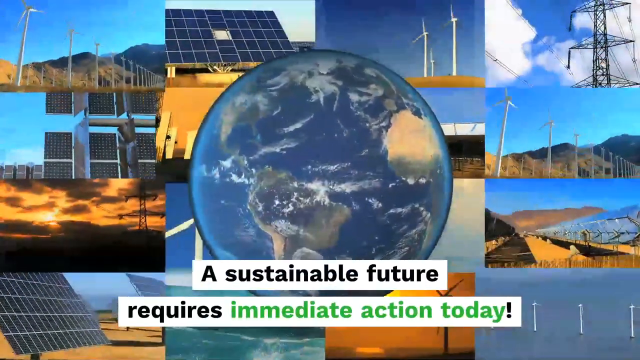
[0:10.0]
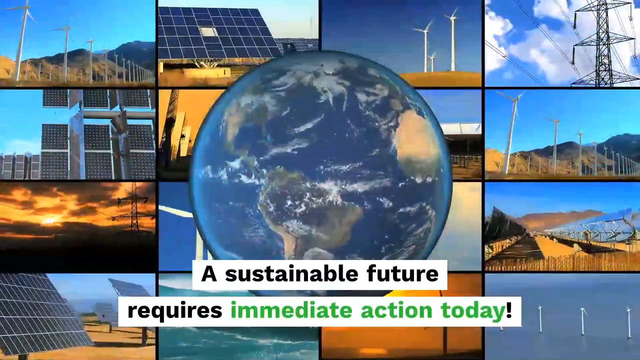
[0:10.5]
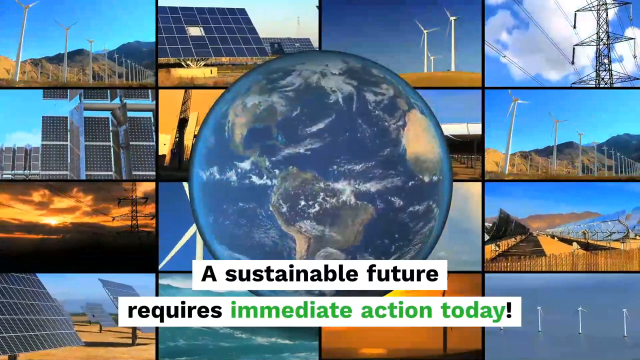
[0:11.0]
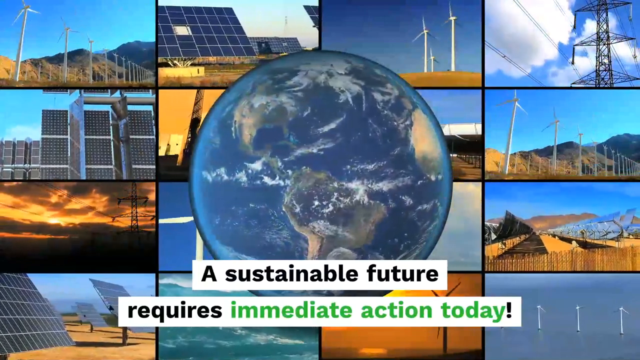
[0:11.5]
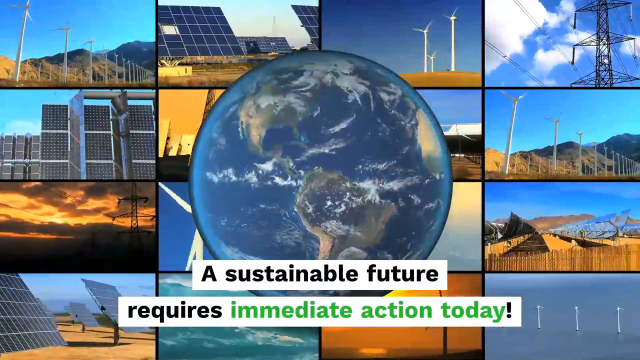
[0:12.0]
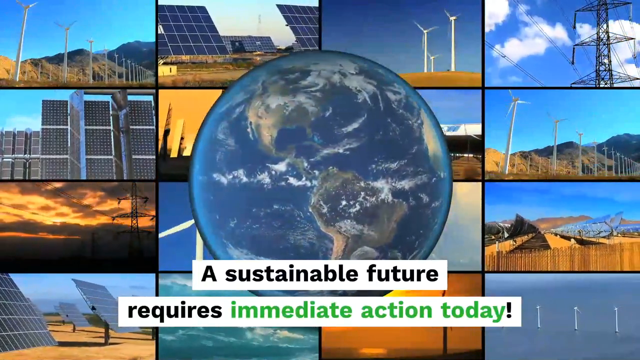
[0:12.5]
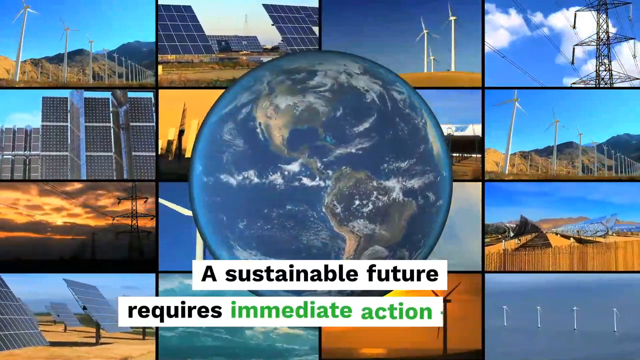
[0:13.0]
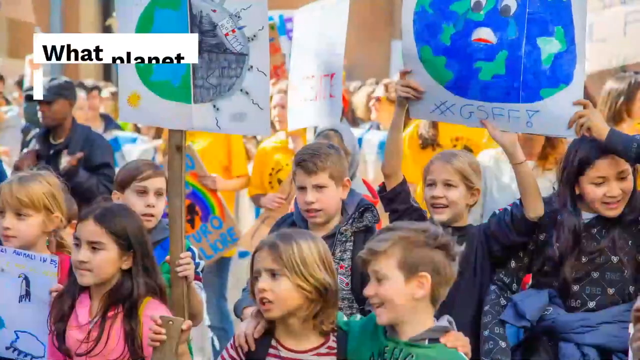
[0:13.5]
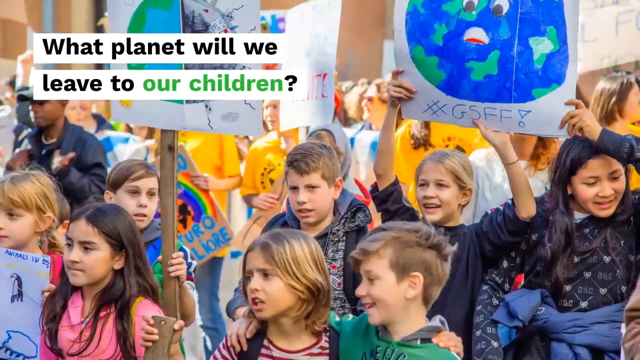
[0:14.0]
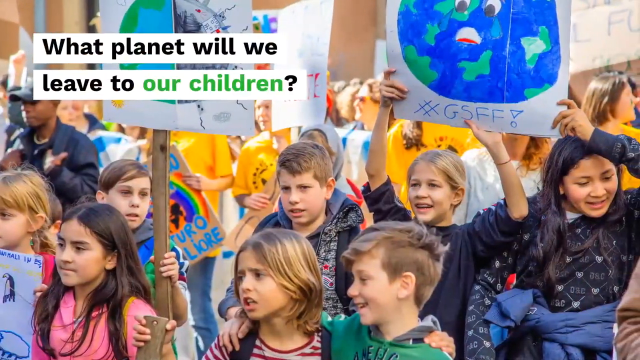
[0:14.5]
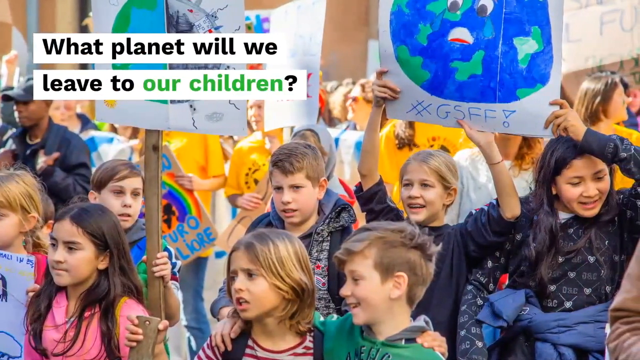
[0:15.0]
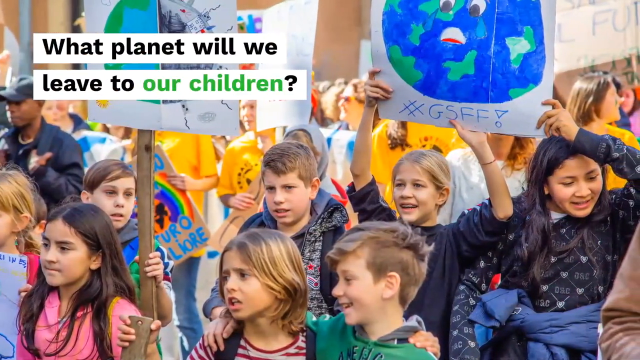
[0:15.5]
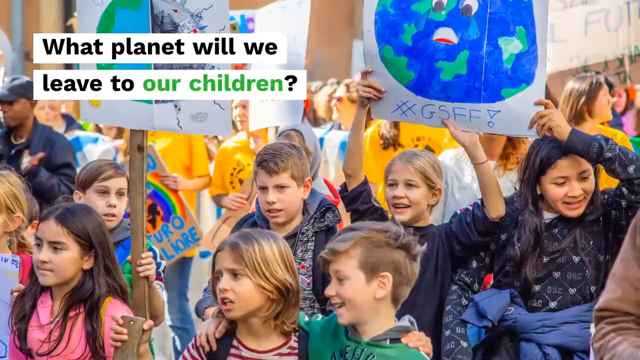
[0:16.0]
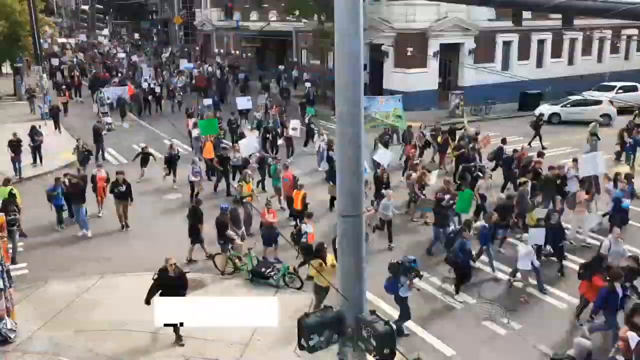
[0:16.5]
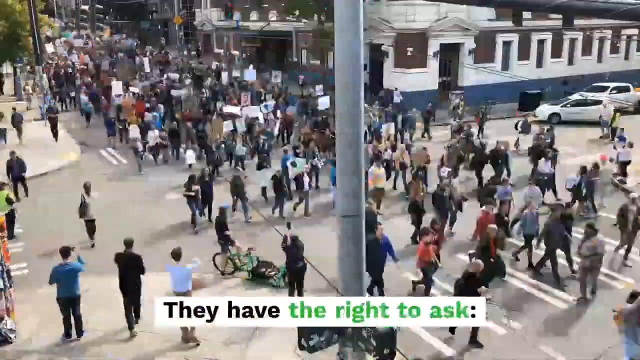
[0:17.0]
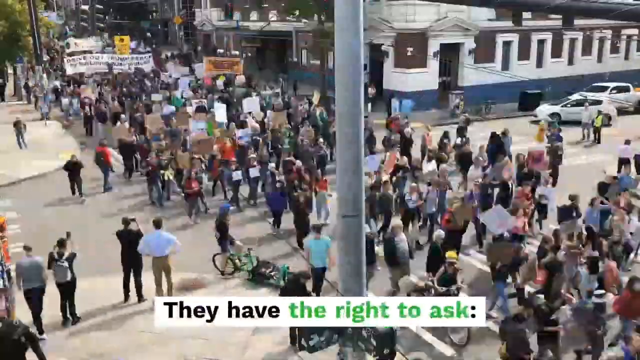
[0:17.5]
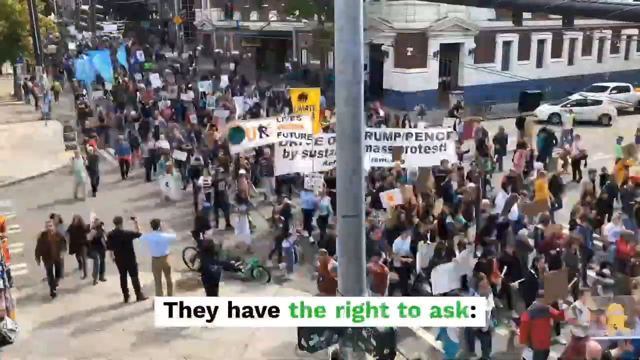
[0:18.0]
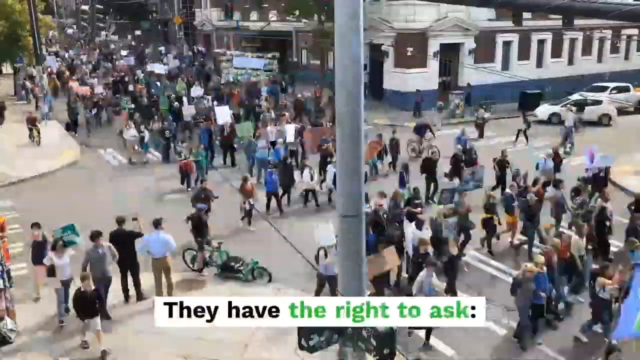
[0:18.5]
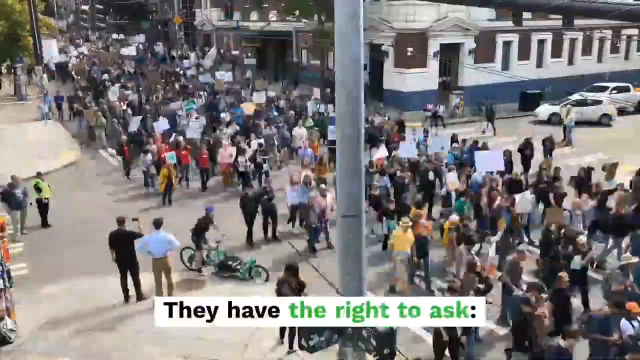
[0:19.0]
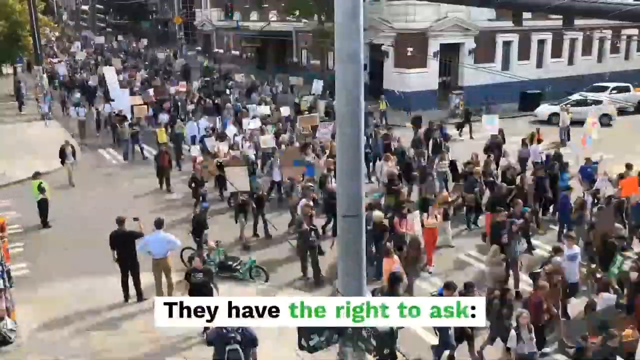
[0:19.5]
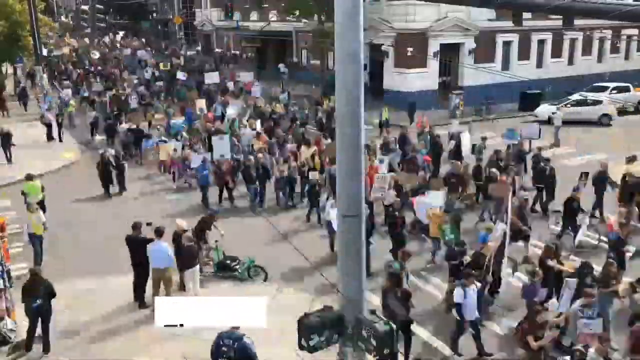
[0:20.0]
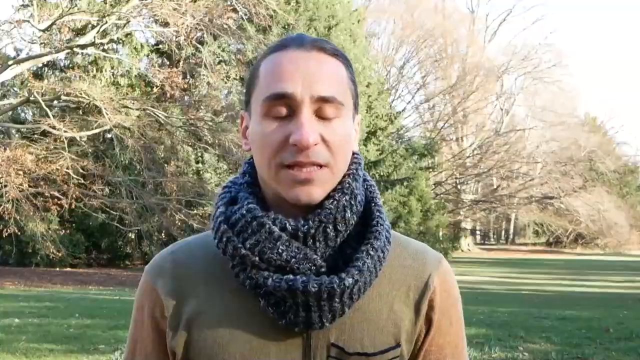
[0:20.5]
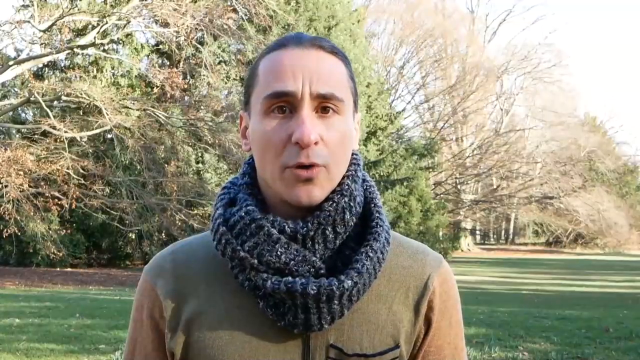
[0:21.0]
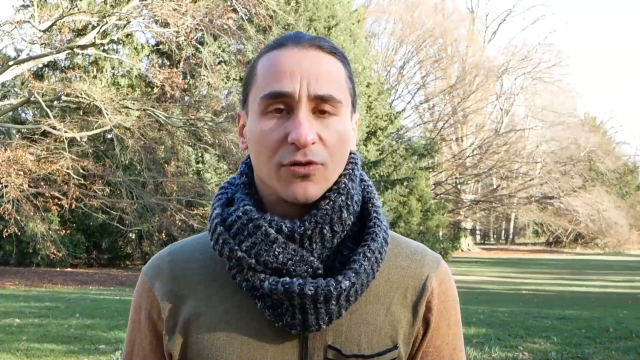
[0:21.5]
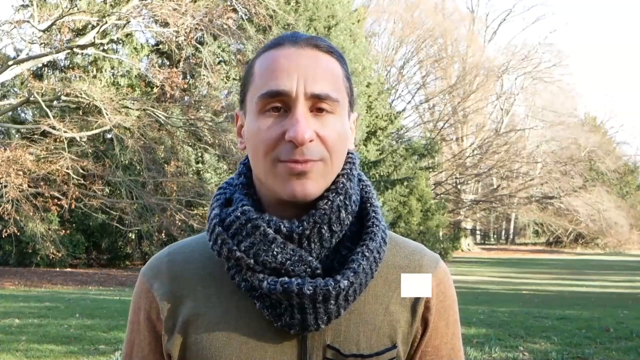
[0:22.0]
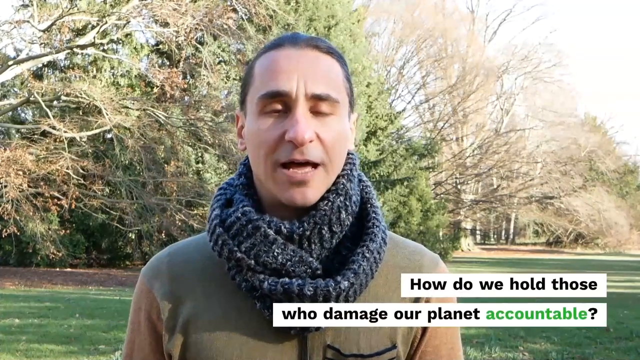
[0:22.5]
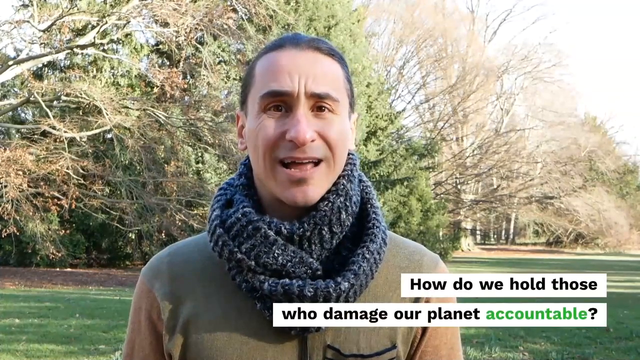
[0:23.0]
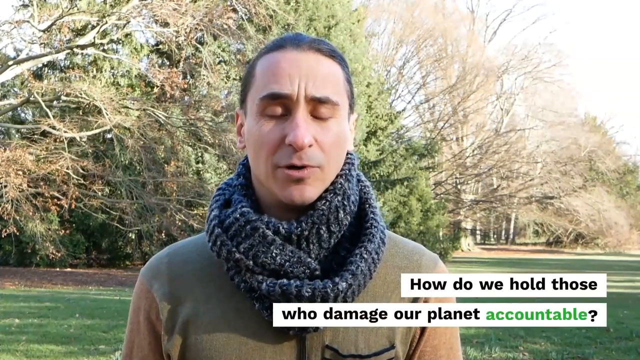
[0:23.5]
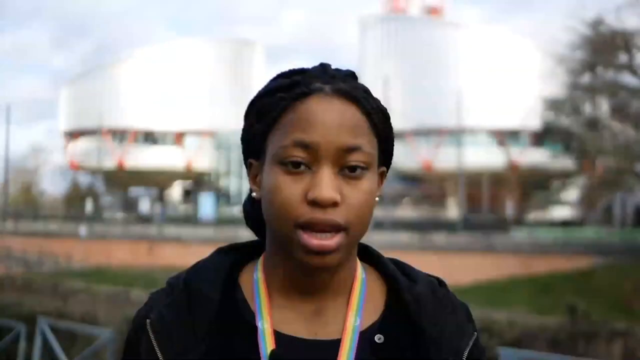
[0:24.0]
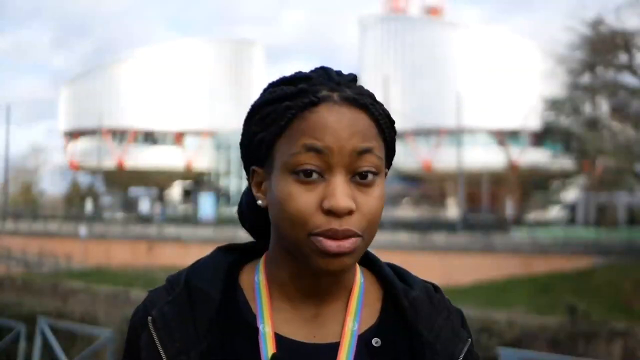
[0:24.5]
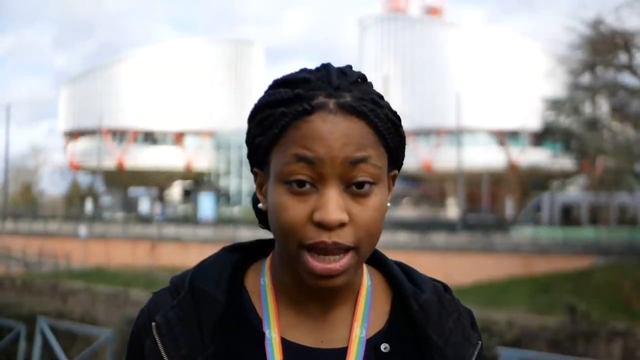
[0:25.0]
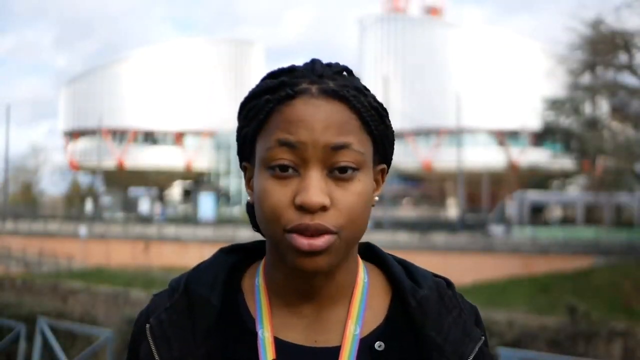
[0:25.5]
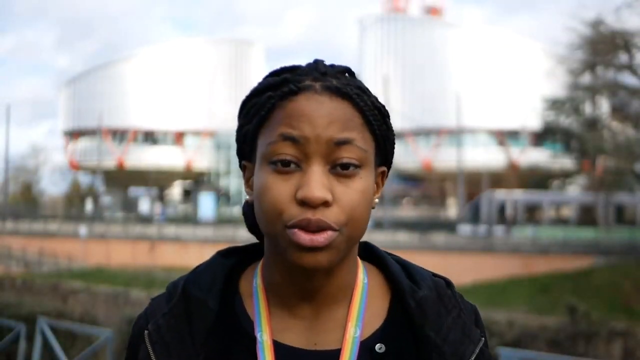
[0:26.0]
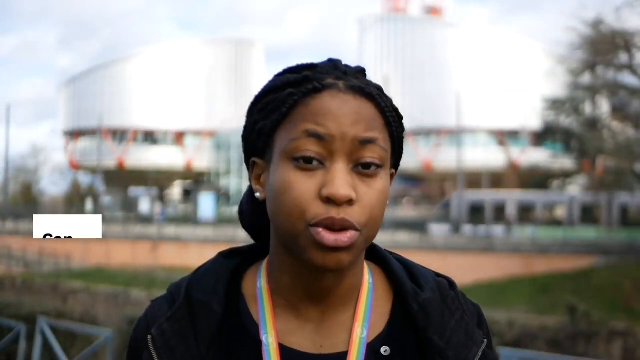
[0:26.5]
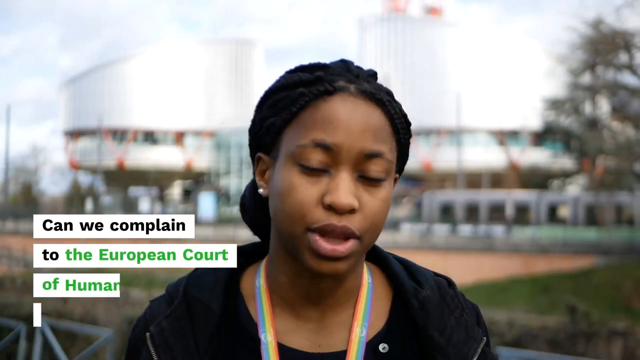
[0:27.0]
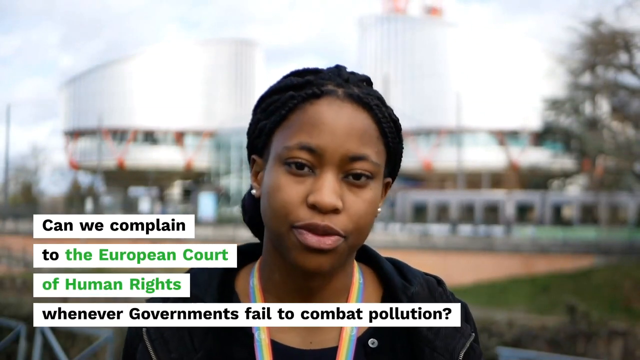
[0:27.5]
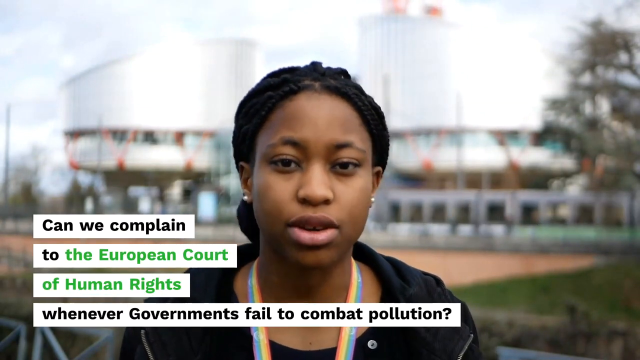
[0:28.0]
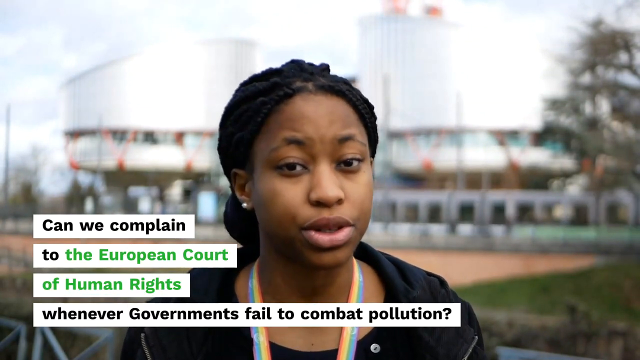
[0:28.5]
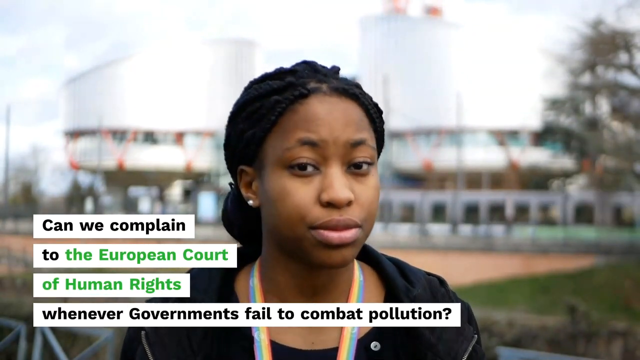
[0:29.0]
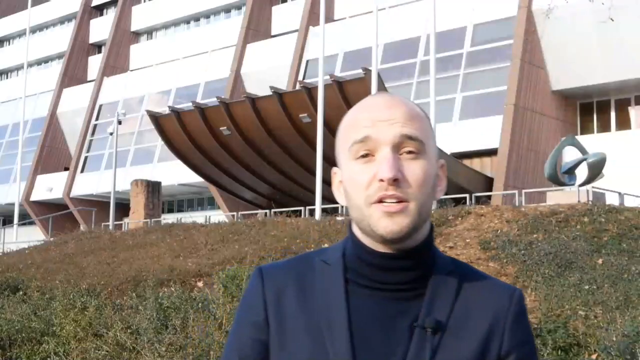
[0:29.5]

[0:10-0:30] A globe appears with the writing "a sustainable future requires immediate action today", with solar panels, electricity and transporters in the background. Text then reads "What planet will we leave to our children?" over a picture of many children, maybe 5 to 15 years old, who seem to be rioting. Next, text reads "They have the right to ask" over what also seems to be a riot, with many people moving further back, some vehicles, and a building. A reporter then appears wearing a scarf and a green garment; behind him are trees that are withering, some dry and some with a slight green color. Text in the bottom right reads "how do we hold those who damage our planet accountable?" A lady then speaks with a bus in the background, and text asks "can we complain to the european court of human rights".